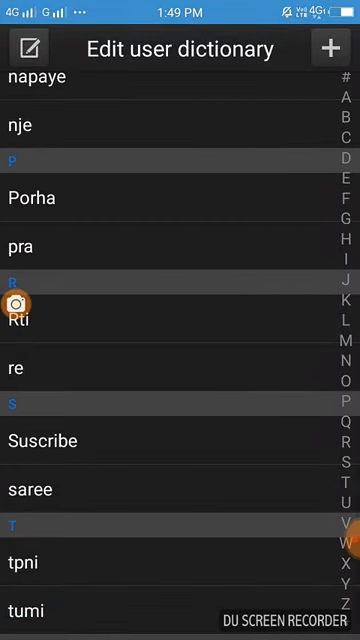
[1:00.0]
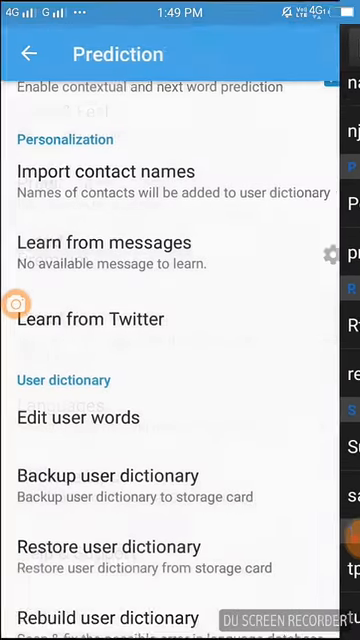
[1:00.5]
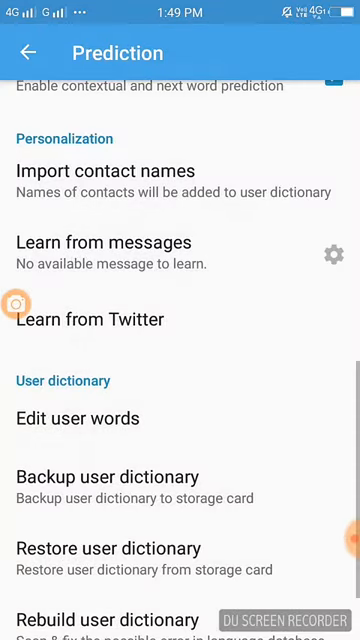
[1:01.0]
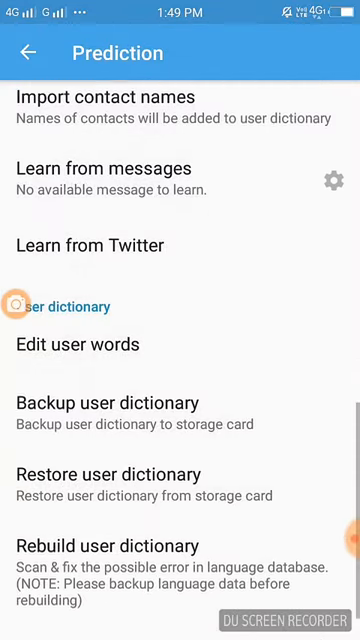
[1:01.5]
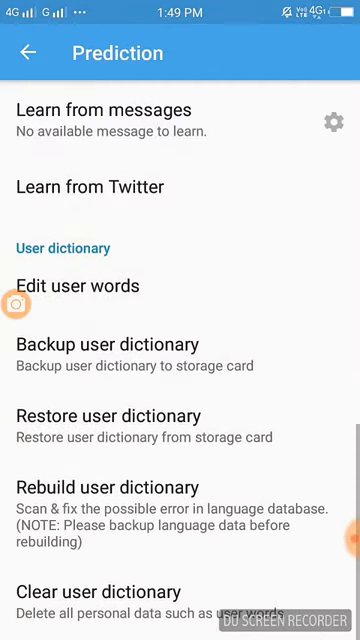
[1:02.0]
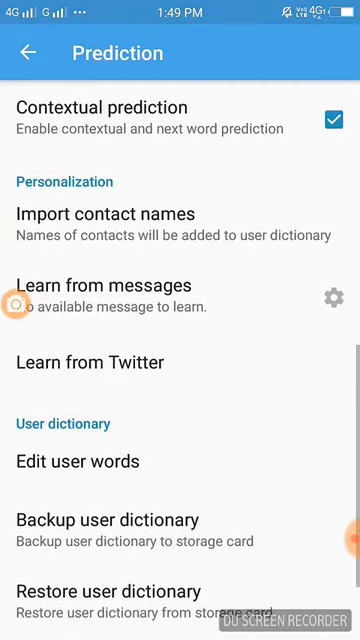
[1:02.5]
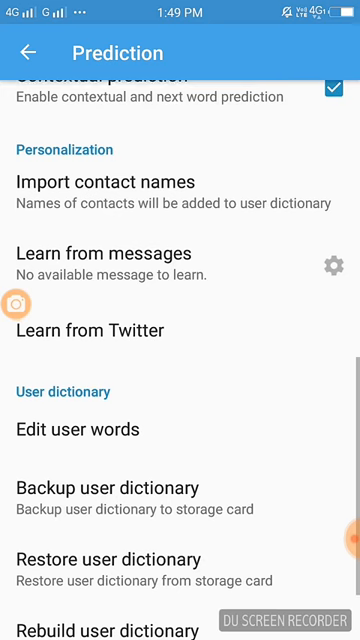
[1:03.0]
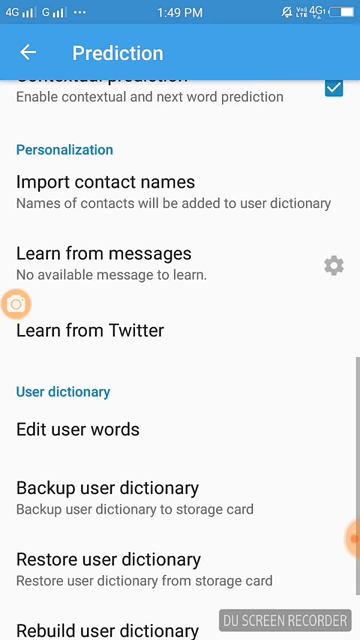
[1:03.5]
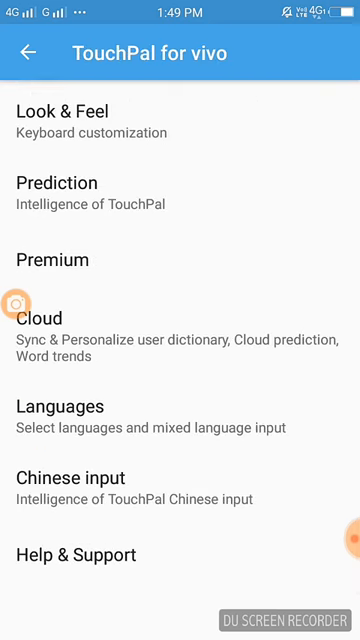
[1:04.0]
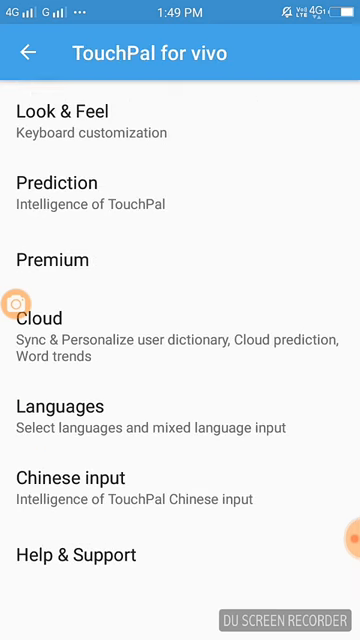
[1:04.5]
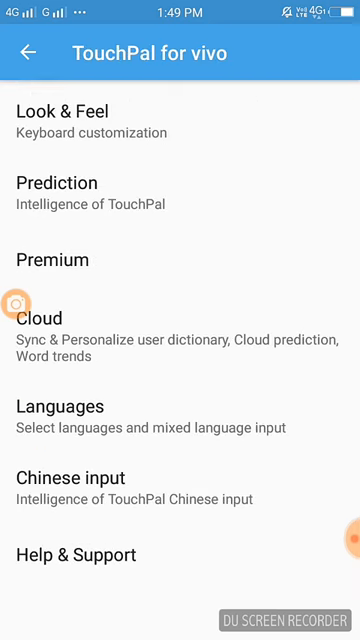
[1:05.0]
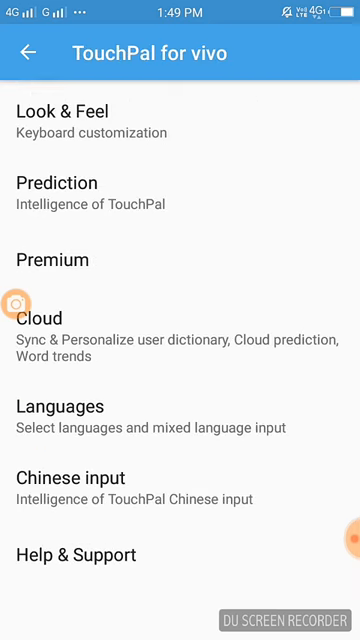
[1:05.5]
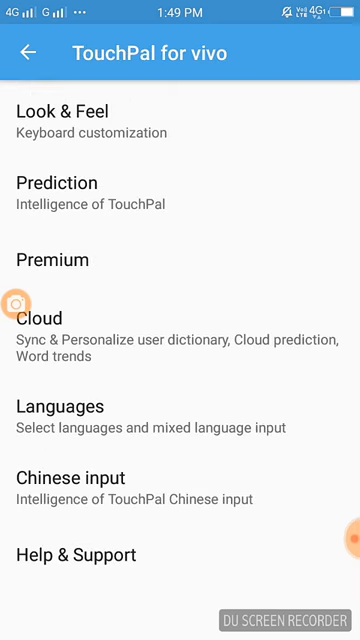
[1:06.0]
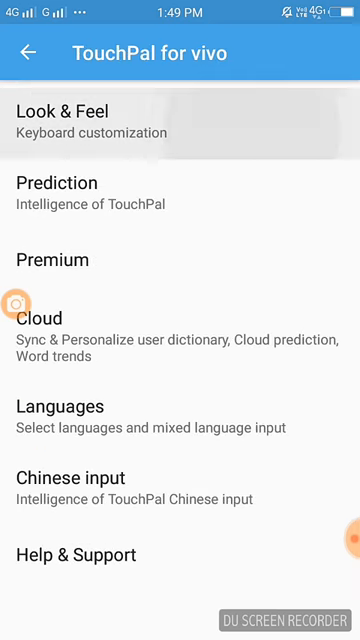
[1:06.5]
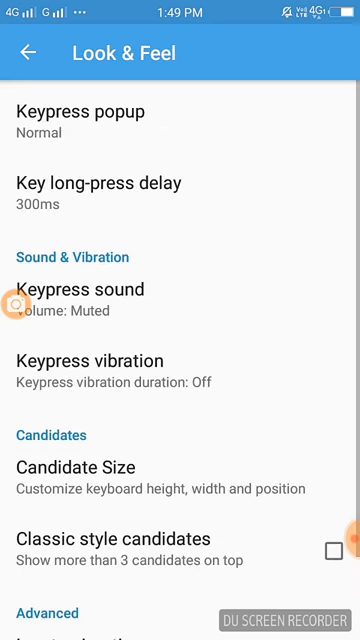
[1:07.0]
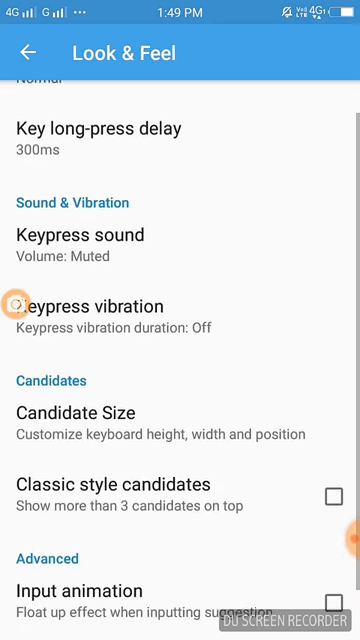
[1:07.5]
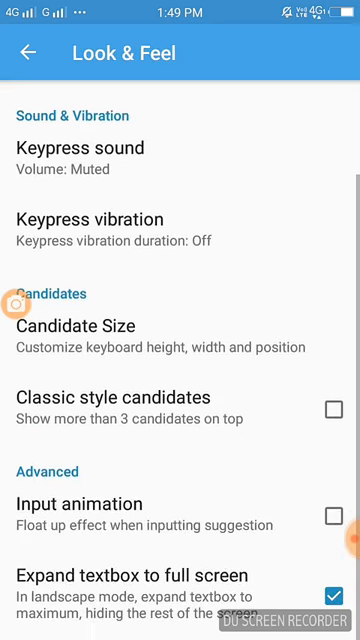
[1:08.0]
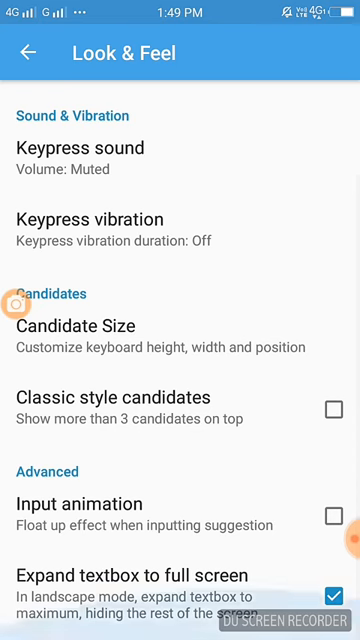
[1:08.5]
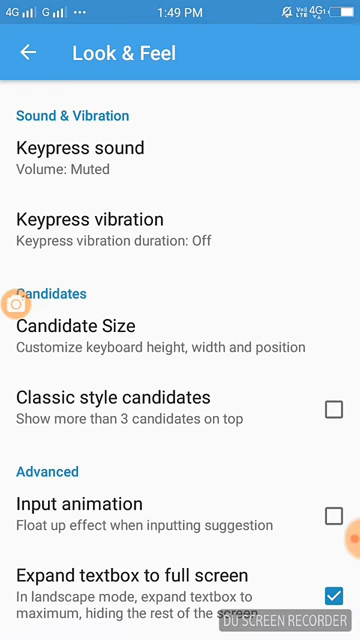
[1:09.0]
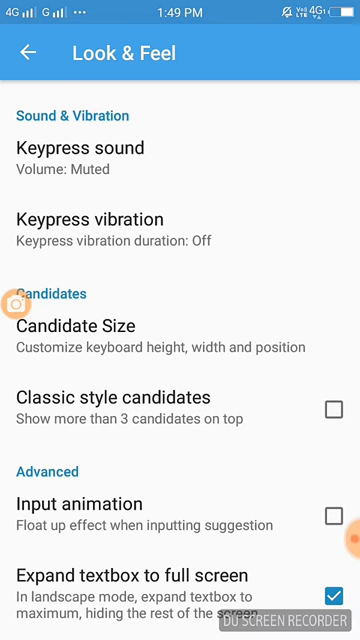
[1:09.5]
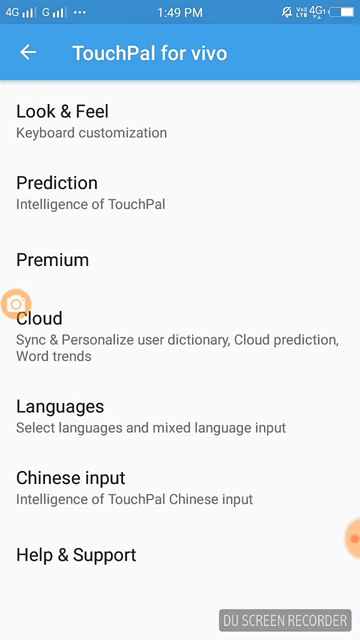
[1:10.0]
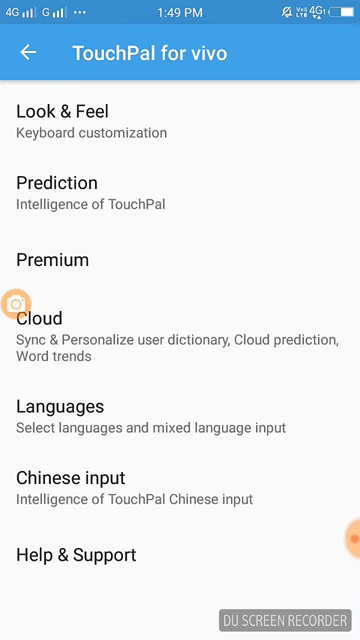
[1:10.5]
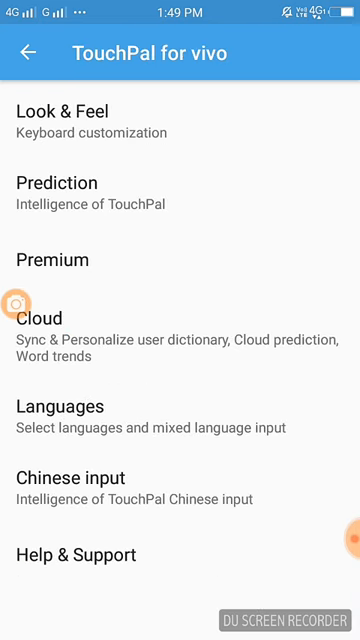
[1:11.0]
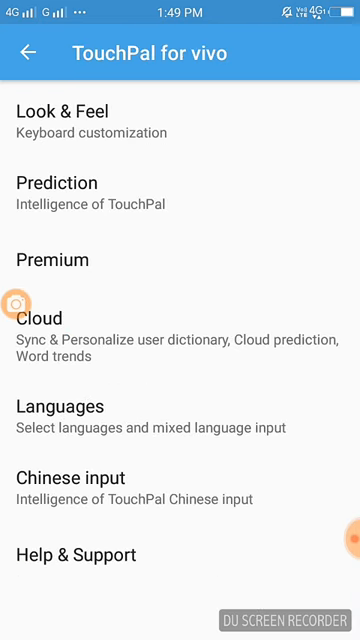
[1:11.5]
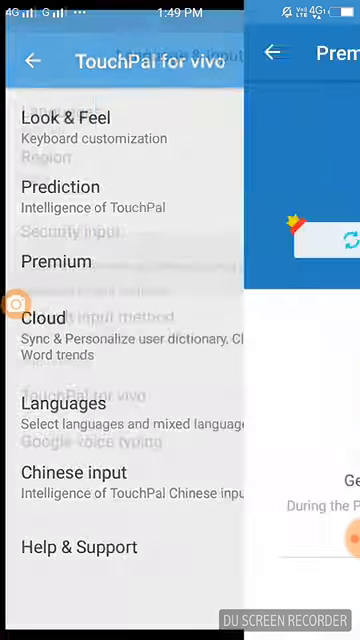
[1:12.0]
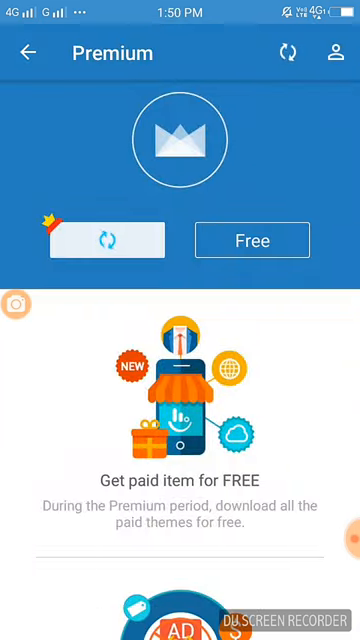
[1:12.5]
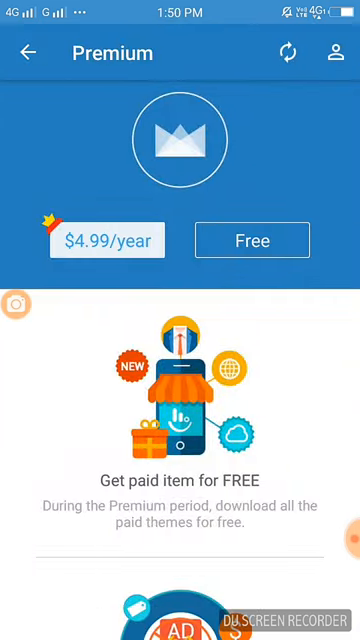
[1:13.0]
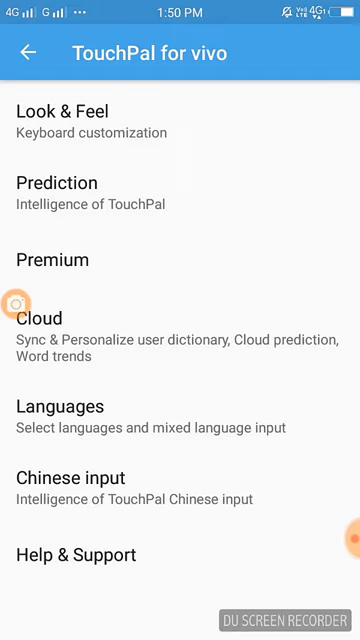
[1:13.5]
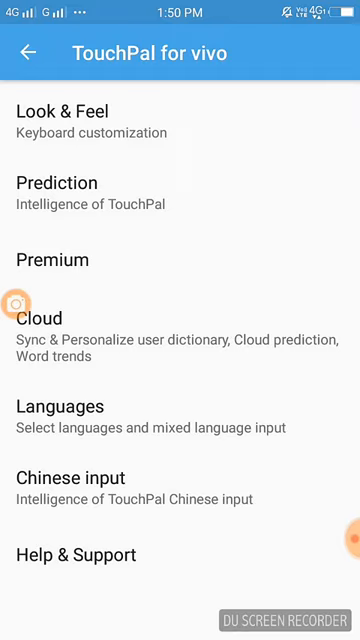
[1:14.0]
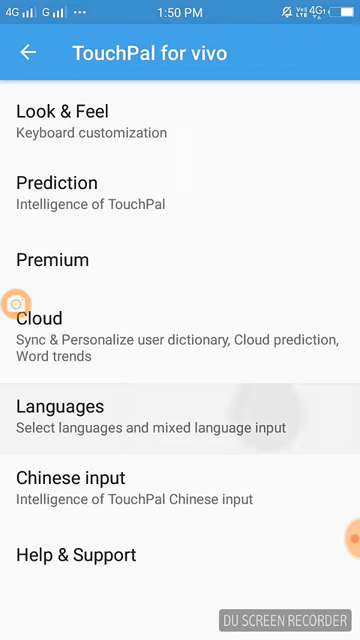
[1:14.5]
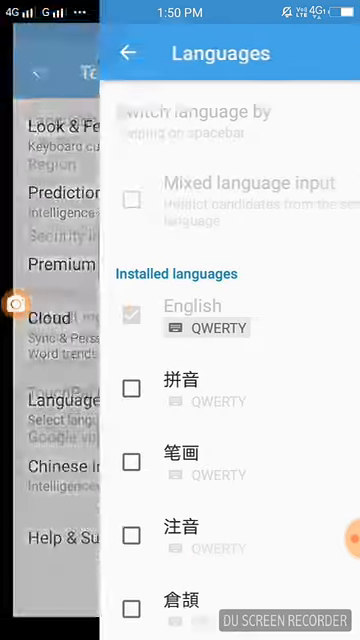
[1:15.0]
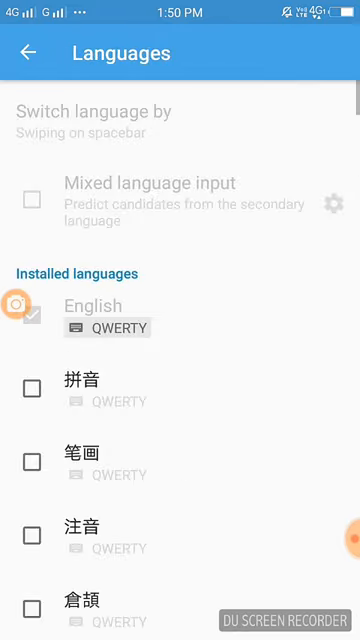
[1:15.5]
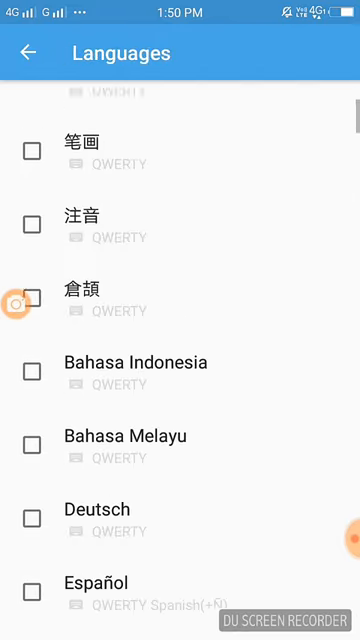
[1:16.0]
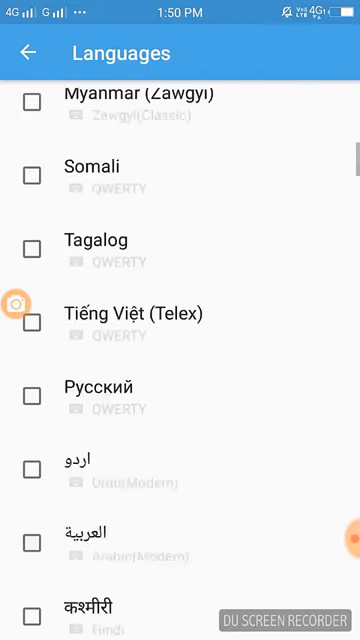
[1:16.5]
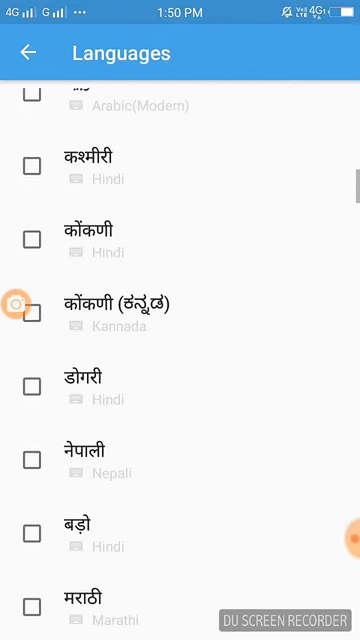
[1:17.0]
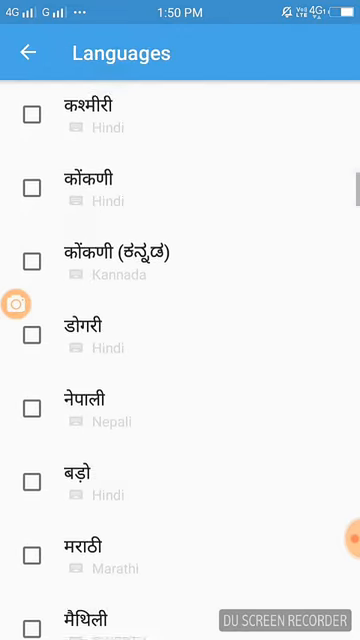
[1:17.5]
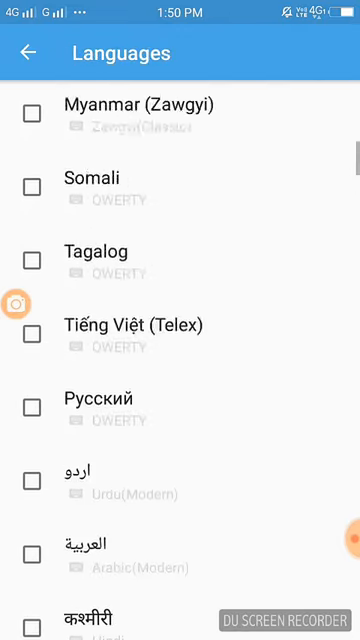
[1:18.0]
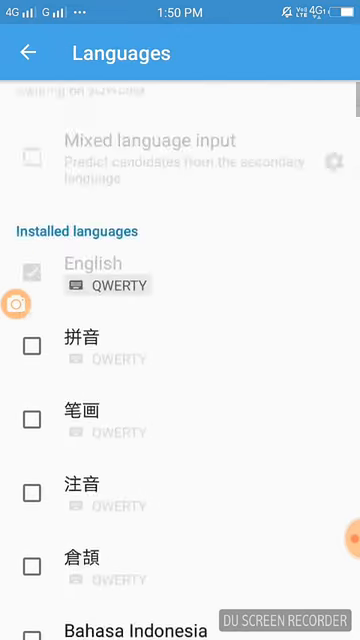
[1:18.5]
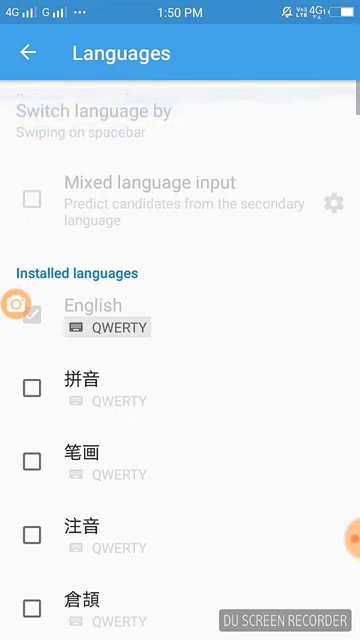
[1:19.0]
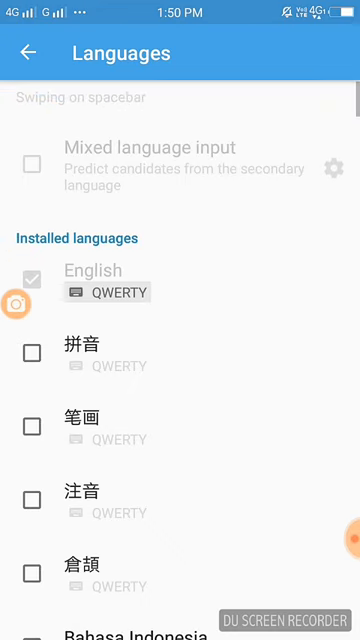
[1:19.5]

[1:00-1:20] The person swipes to the left and is on the predictions tab, then goes back to TouchPal for Vivo and clicks on Look and Feel. It shows different options, including text, key press pop-up, key long press delay, and sounds and vibration. They scroll down, go back to TouchPal for Vivo, then to Premium, then back to TouchPal for Vivo and then to Languages. They scroll all the way down but do not click on any of the languages. Each language has a checkbox, and each has QWERTY grayed out under it.